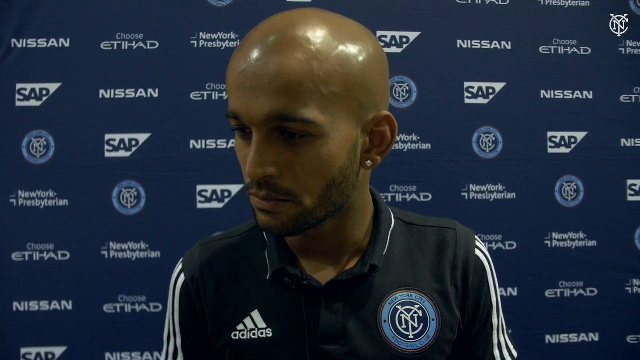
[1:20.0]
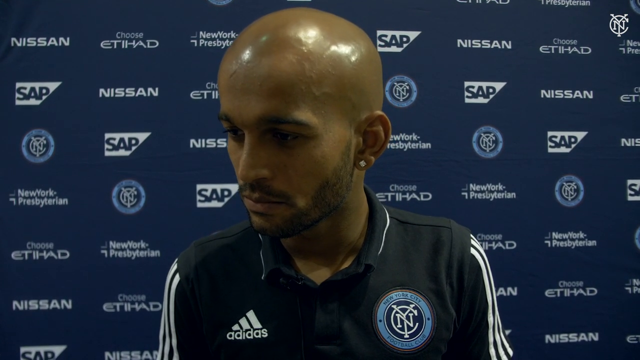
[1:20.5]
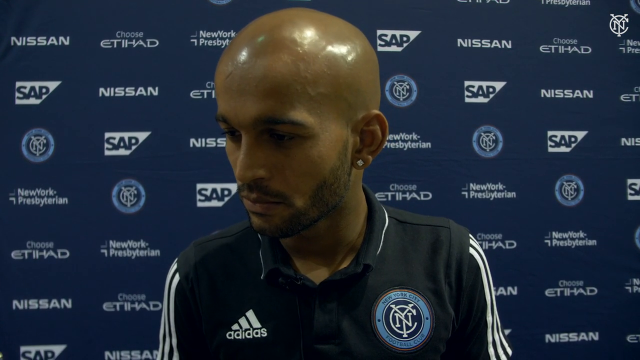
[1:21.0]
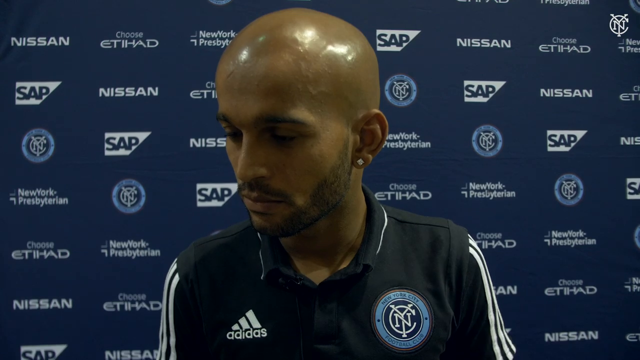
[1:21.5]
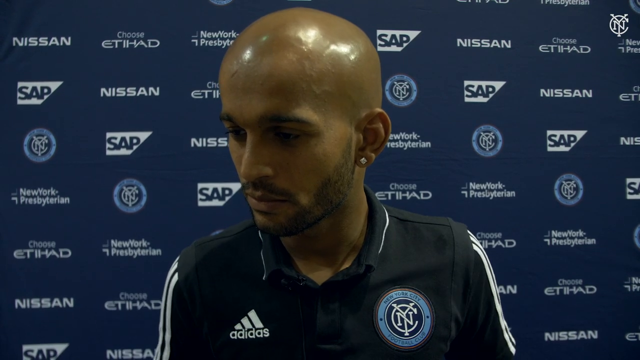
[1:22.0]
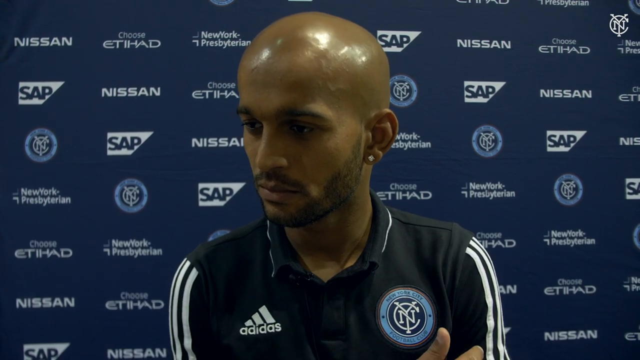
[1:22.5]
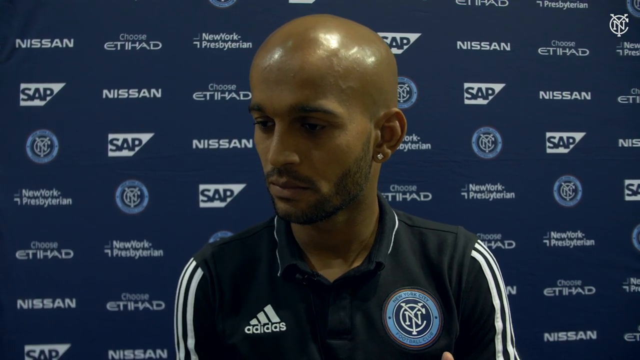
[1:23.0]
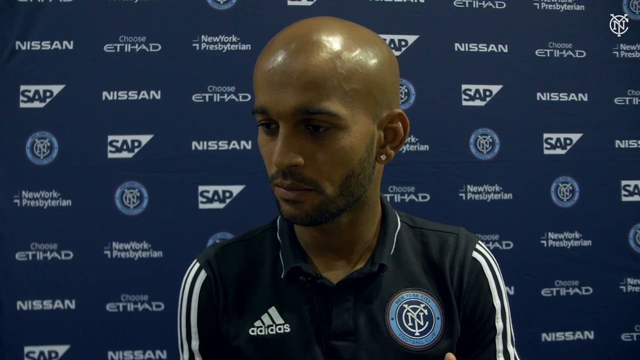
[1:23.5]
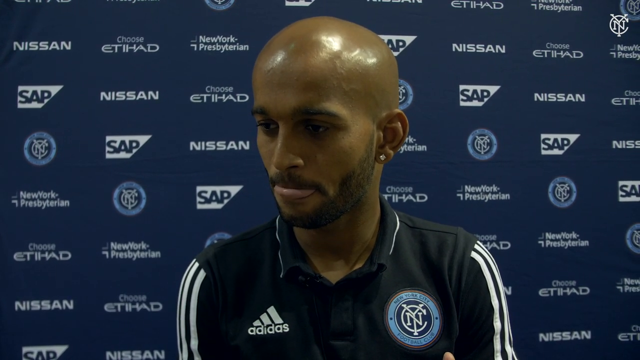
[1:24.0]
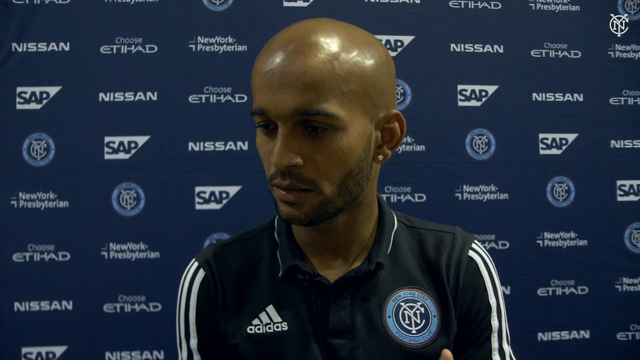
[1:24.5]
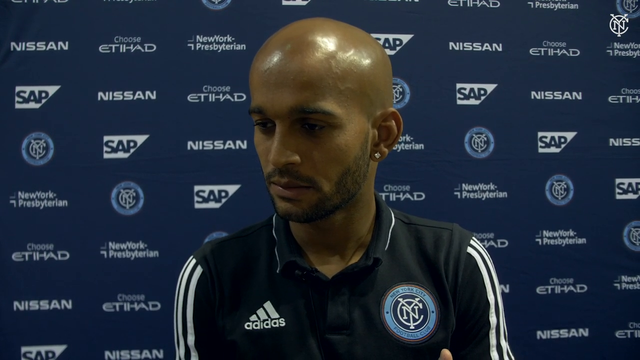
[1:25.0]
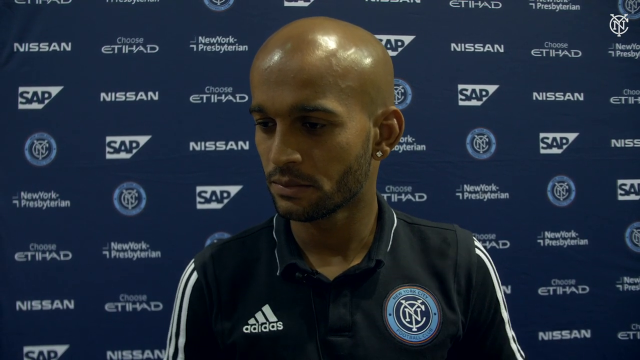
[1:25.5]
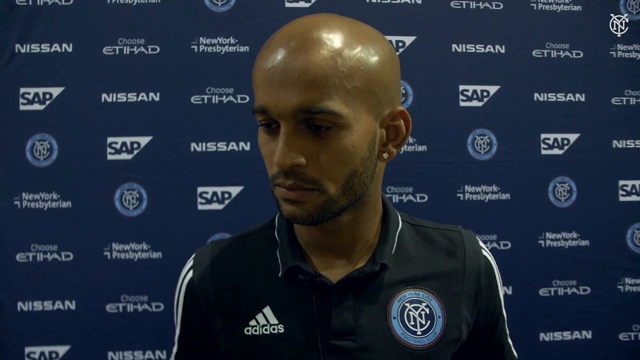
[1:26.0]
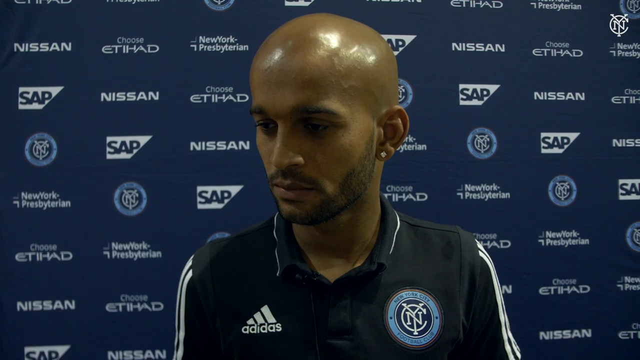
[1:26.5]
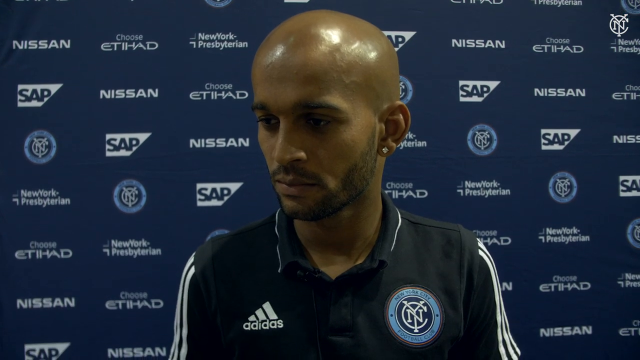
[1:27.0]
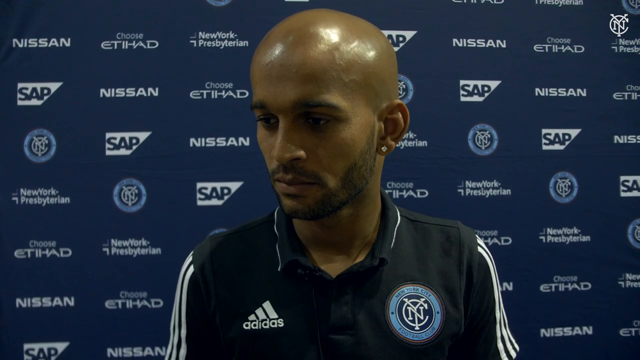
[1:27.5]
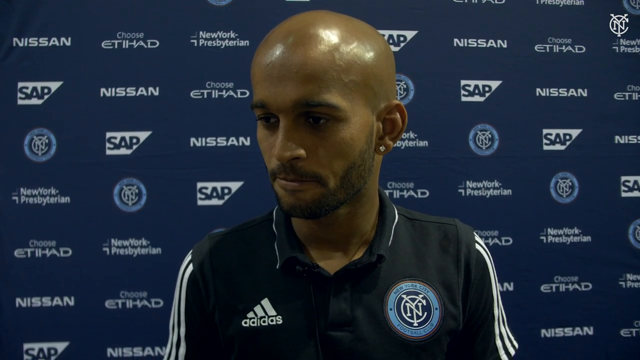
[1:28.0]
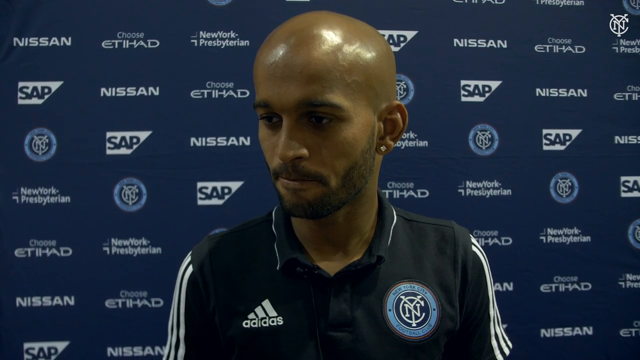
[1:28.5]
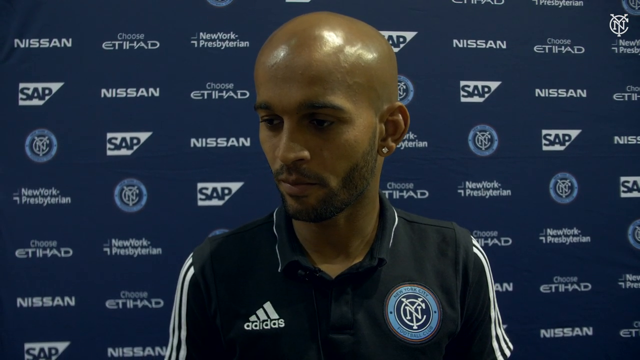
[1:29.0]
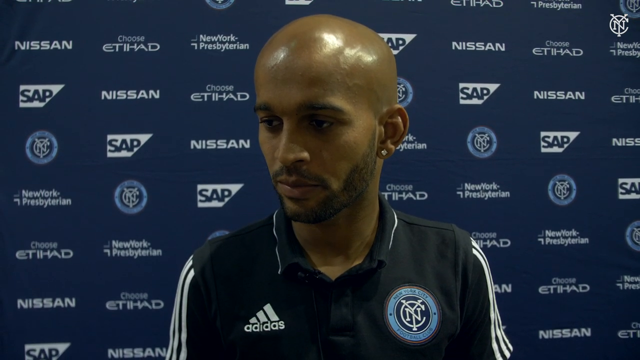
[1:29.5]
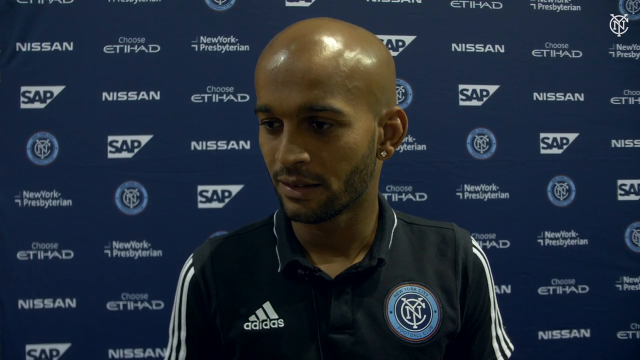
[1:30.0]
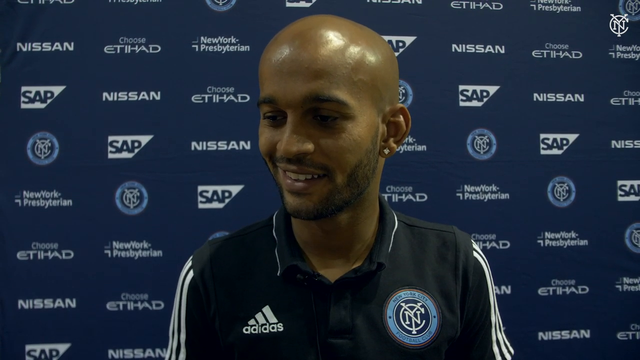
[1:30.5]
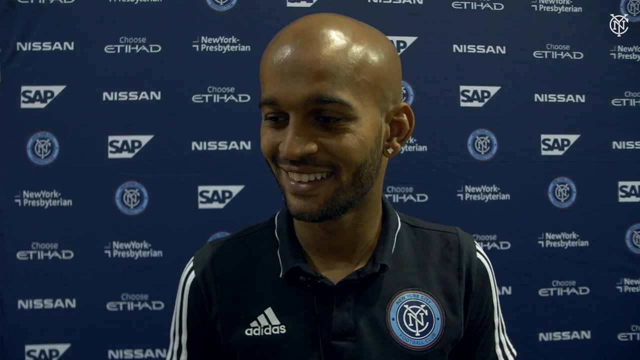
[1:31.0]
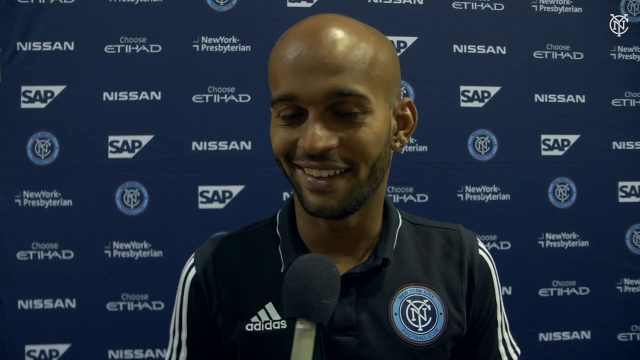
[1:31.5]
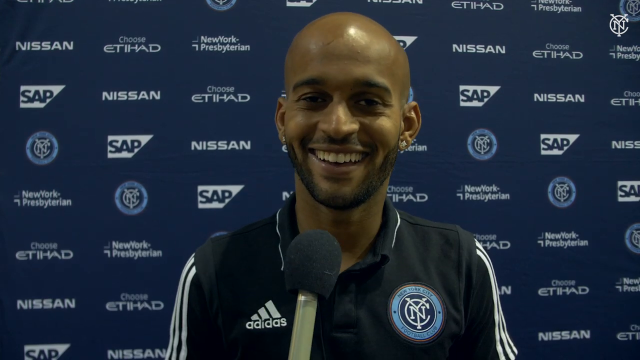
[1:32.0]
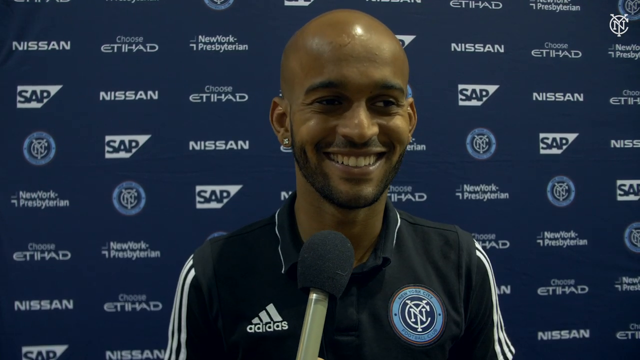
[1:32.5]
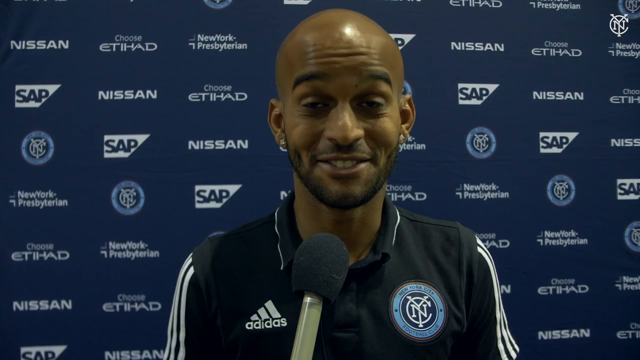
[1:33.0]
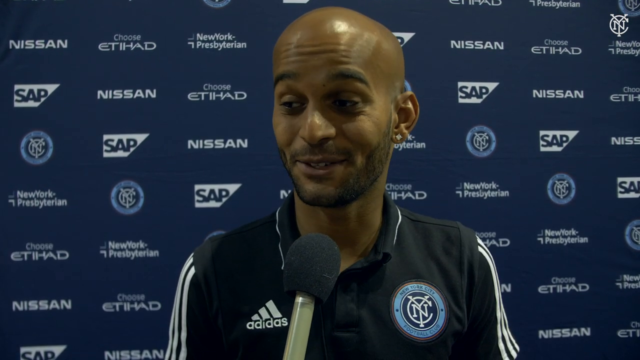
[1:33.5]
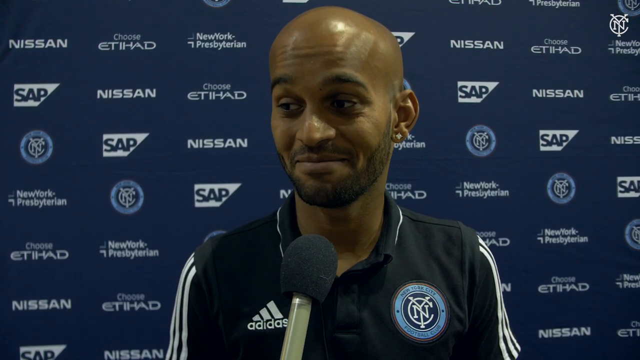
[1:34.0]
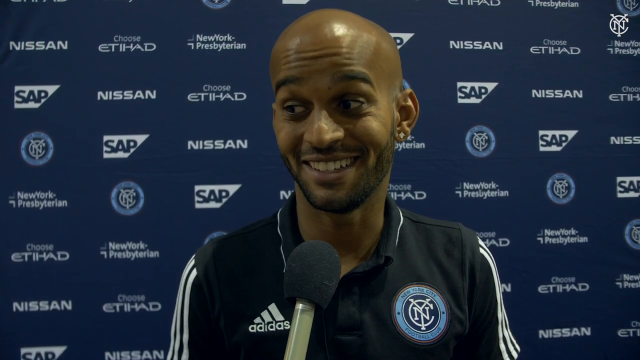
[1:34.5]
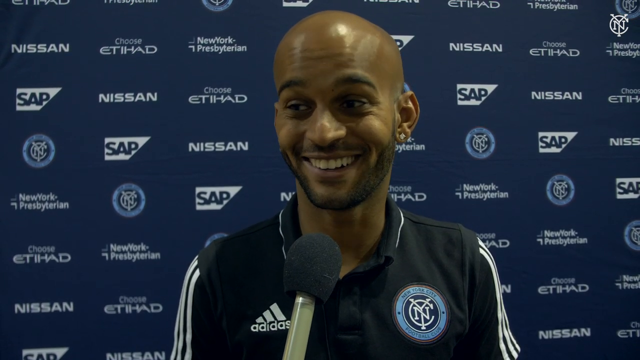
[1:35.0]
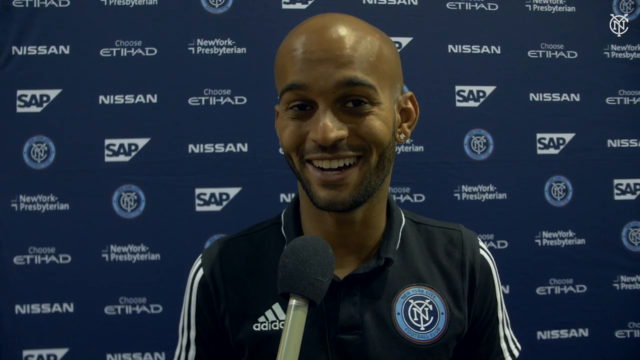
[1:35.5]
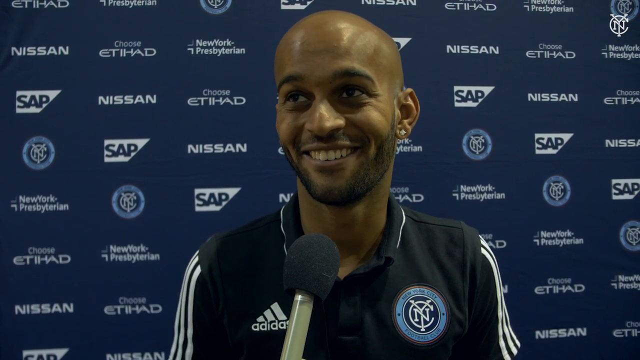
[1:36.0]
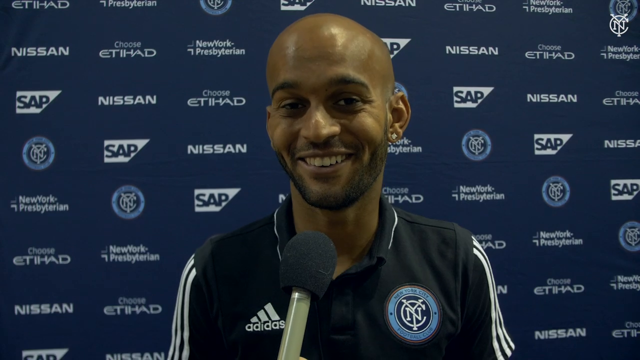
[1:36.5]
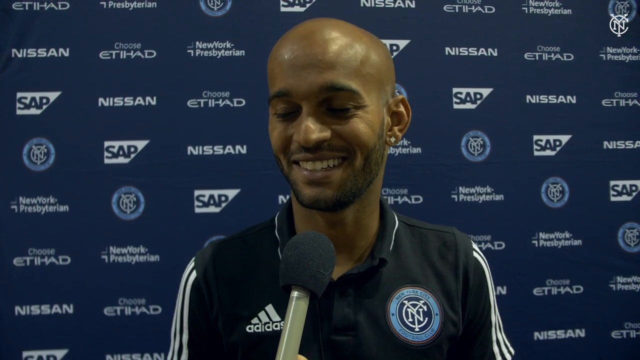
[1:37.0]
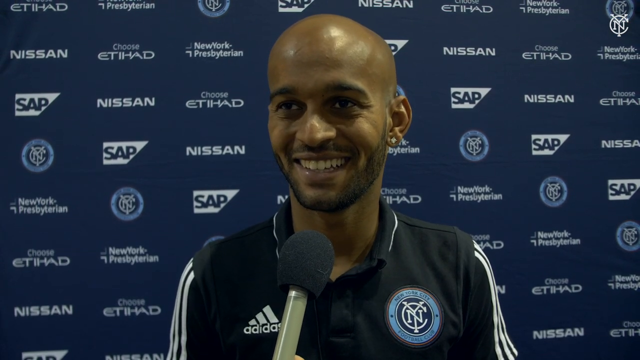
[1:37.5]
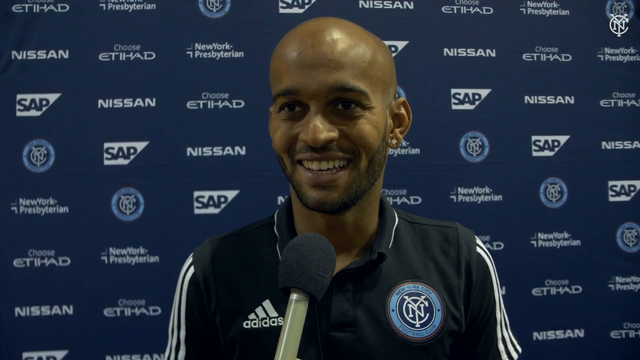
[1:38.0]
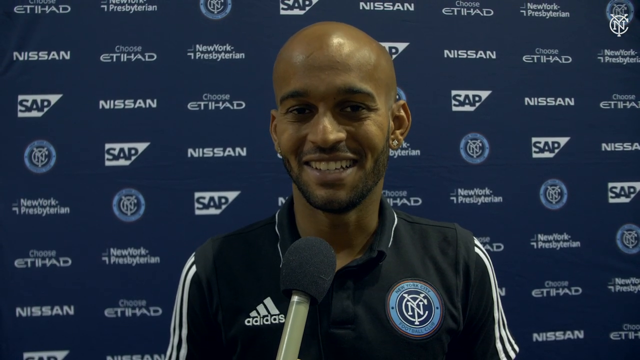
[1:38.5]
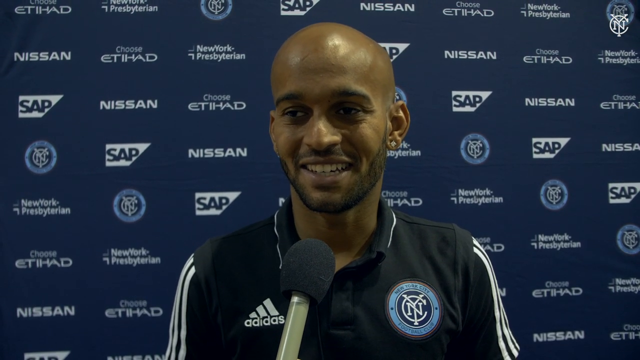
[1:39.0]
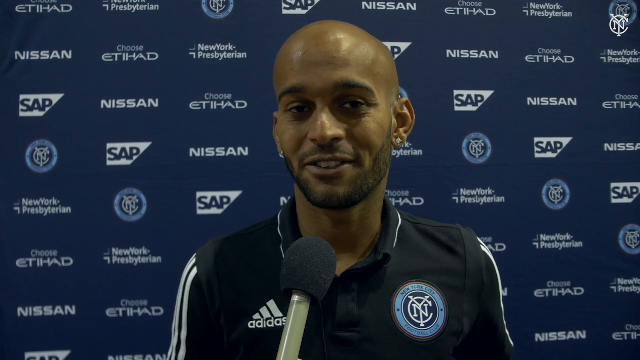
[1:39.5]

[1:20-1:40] The man being interviewed has a bald head and wears a black shirt. He leans a little forward with his head tilted to his right, his eyes looking ahead, which is to his right side, and he looks to be concentrating. He moves his hands, though only his shoulders are seen moving because the close-up shows him from the middle of his chest up. He licks his lips and seems to bring his lips inside a little, then smiles and nods. A microphone comes into view at the bottom center of the frame. The man smiles and glances to his left, smiles again and glances to his right, then nods with his eyebrows raised.